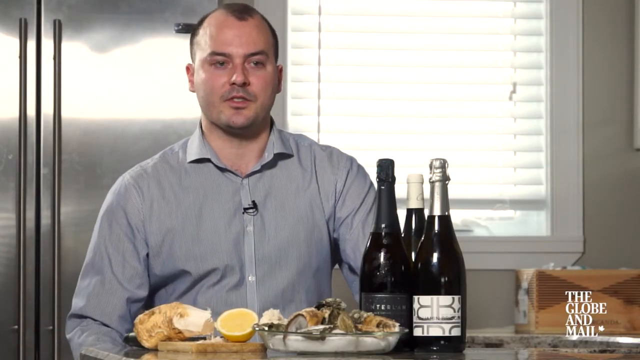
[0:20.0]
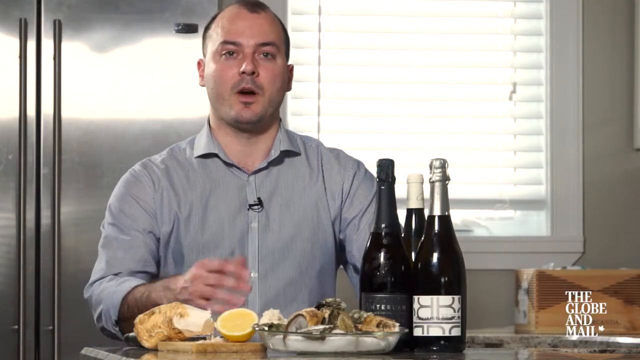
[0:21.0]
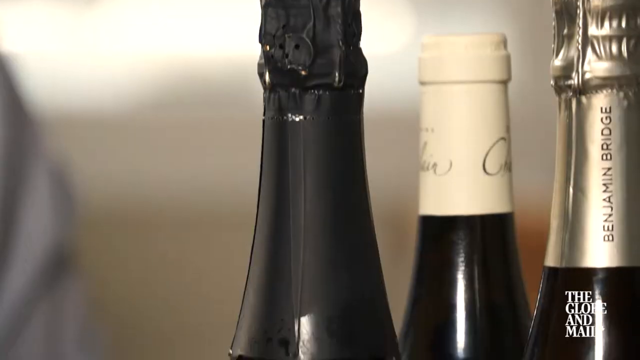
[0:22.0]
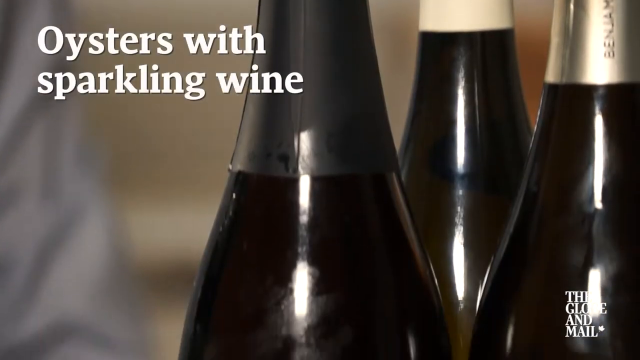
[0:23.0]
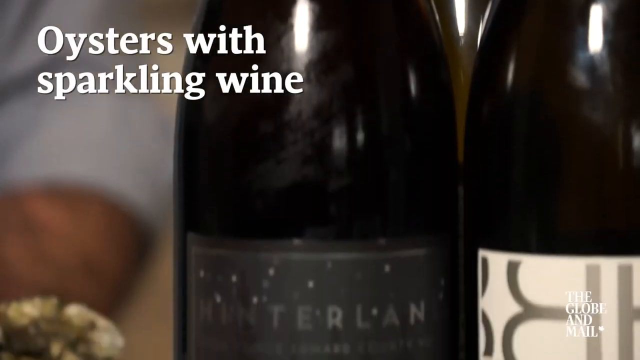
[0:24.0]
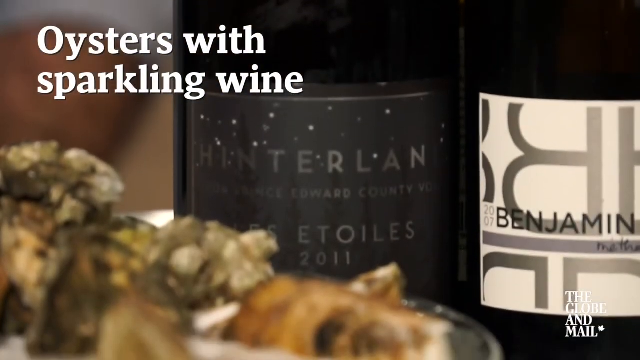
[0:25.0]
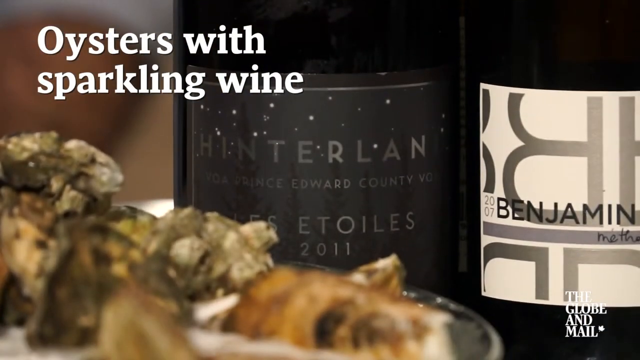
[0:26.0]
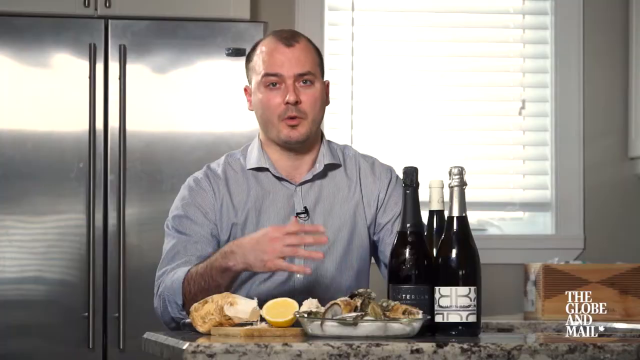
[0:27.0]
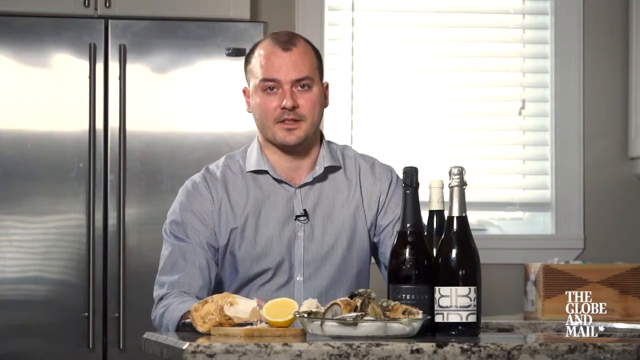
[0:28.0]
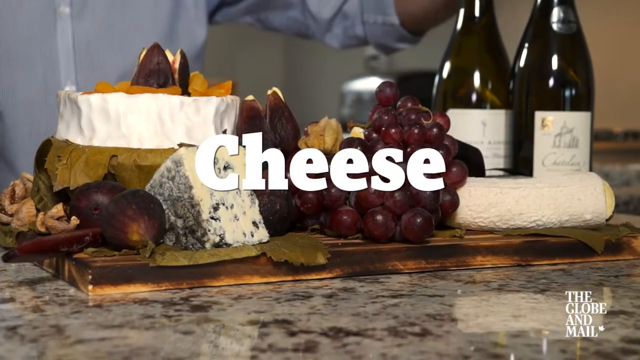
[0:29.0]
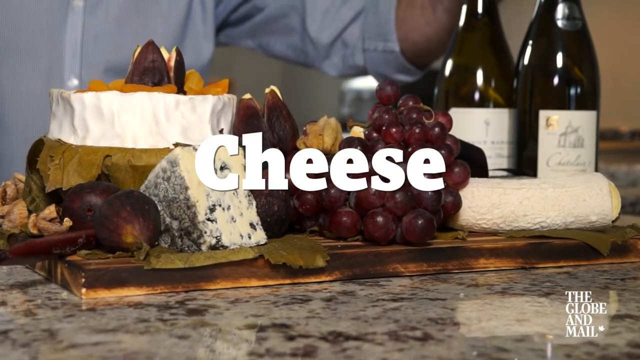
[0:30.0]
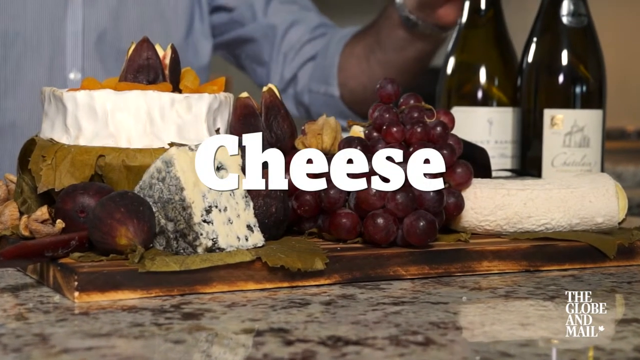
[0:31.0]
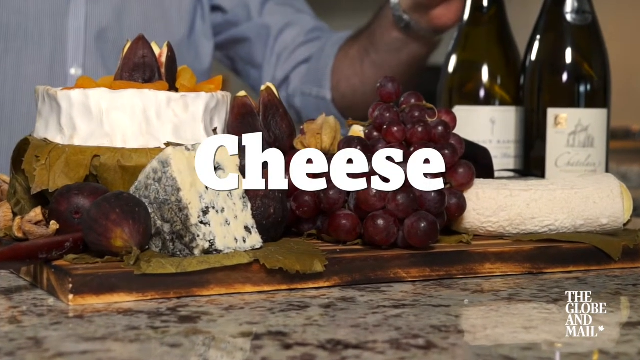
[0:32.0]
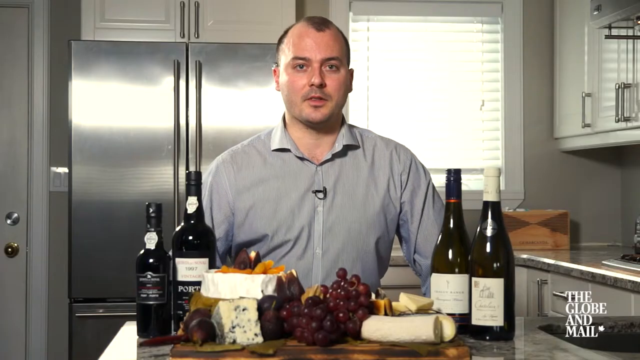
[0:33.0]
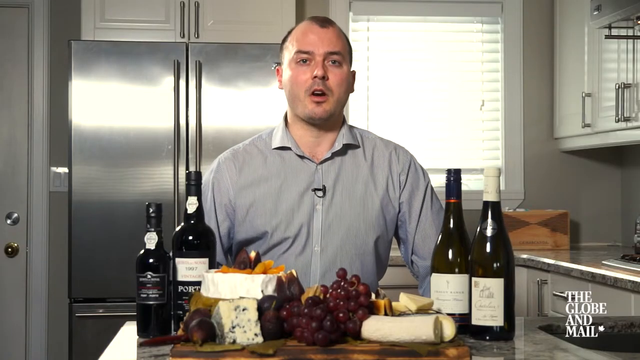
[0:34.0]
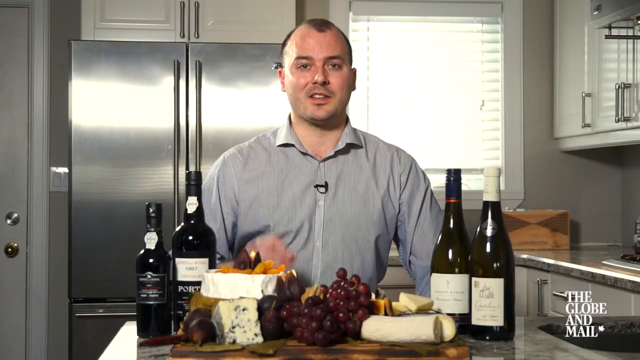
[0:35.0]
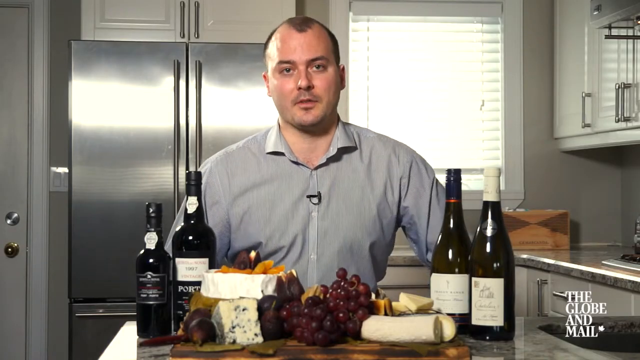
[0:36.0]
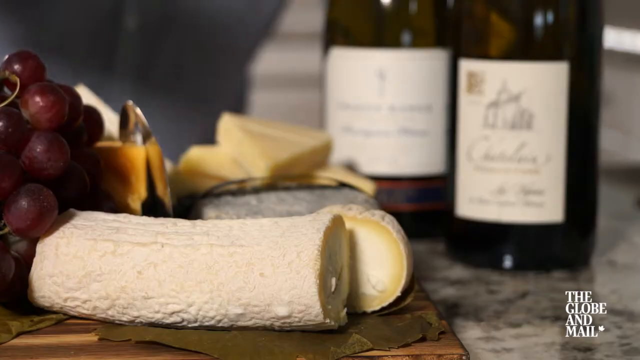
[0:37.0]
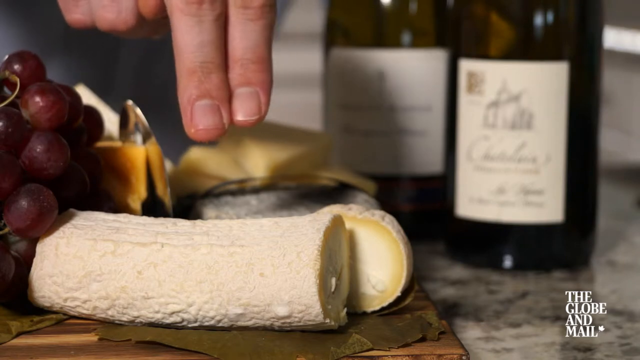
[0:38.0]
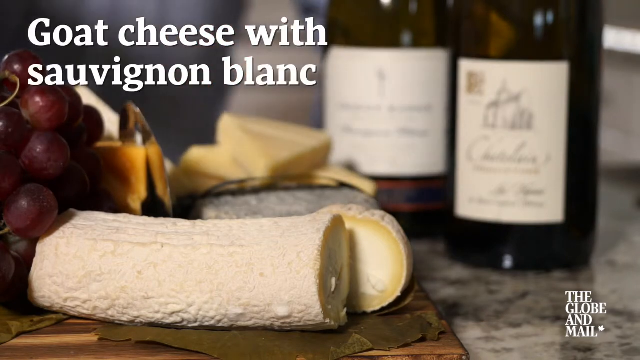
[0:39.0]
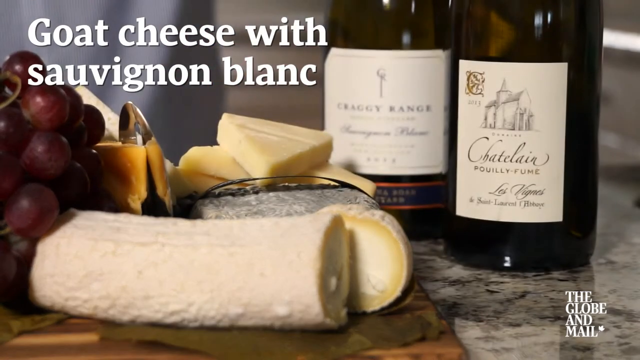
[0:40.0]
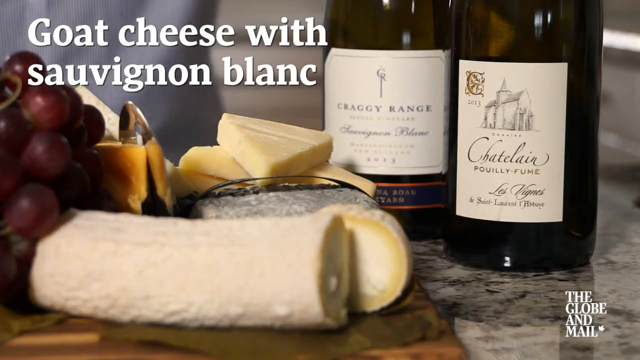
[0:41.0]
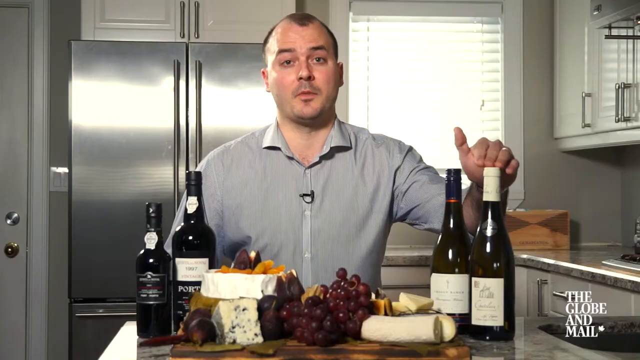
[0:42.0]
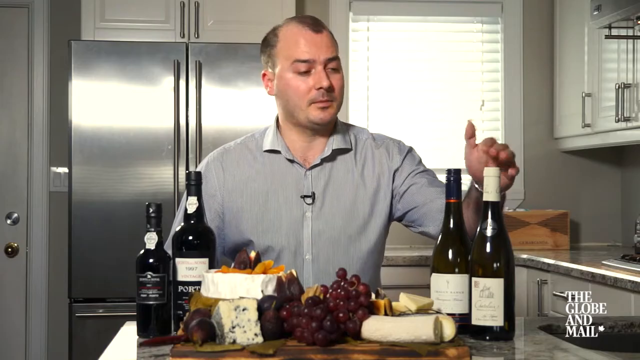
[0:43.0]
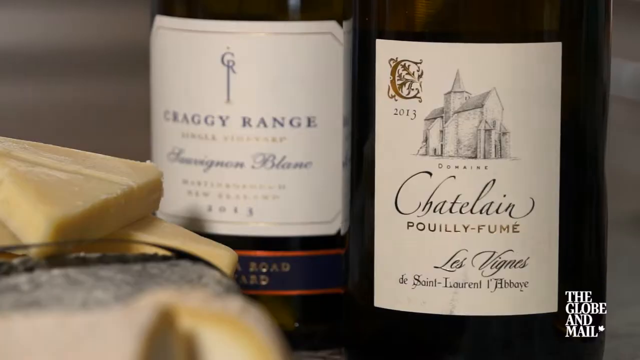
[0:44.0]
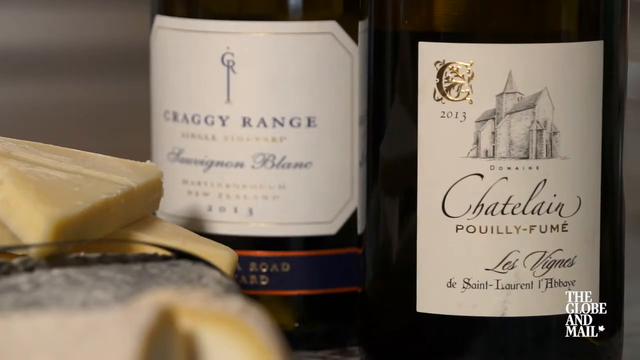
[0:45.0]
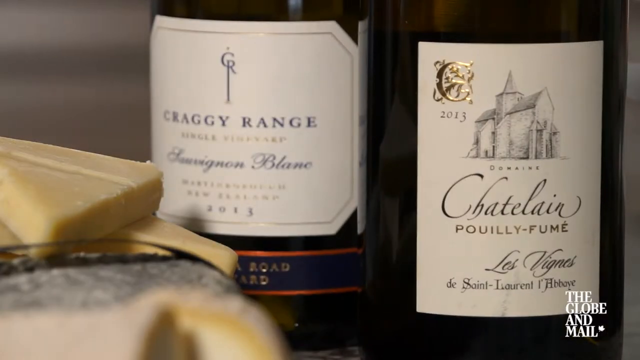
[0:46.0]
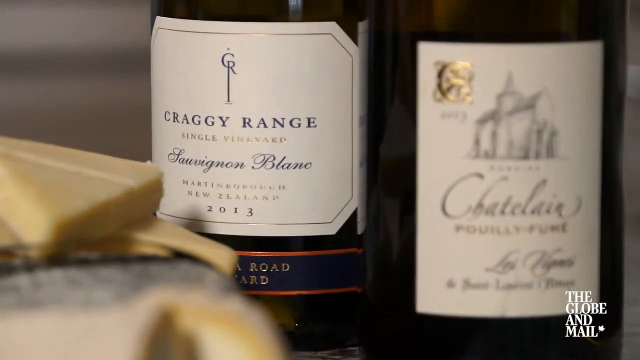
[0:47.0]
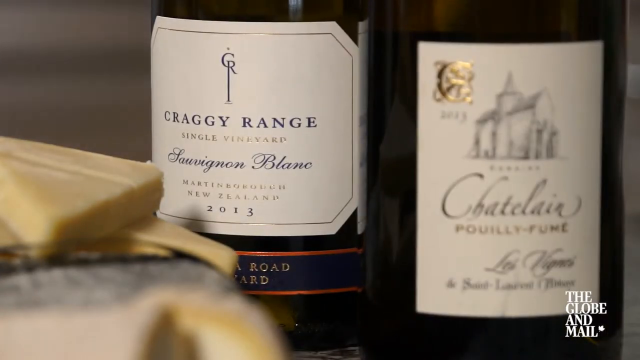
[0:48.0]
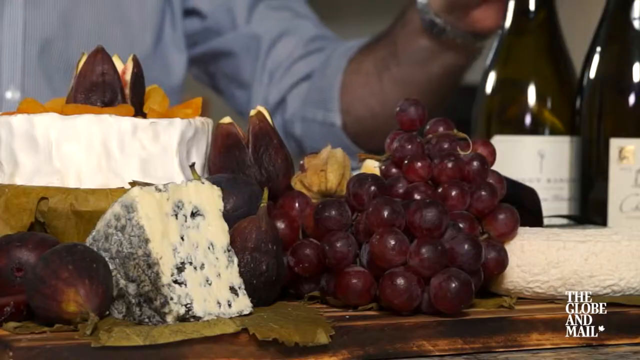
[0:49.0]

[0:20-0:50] Will stands behind three bottles of wine, all black, with oysters and sliced lemon on the table. Behind Will is a silver refrigerator. The video zooms in on the wine, and on the left side of the screen white text reads "Oyster with sparkling wine" as the view moves from top to bottom. The label on one of the wines reads "Hinterlan" in grey on a black background. Then the word "cheese" appears in bold white text, and goat cheese, grapes and other food items are on a charcuterie board. The video zooms out to show Will standing behind two bottles of wine to his right and two to his left, with fruit and food items in the middle. Will points with two fingers to a sliced, unpeeled banana on the charcuterie board. Text appears at the top left of the screen reading "goat cheese with sauvignon blanc." Will points to the bottle with a white cover, and the camera zooms into the labels of both wines. One is Craggy Ranch, a single vine sauvignon blanc produced in New Zealand, with 2013 on the label. The other is Châtelain Pouilly-Fumé.